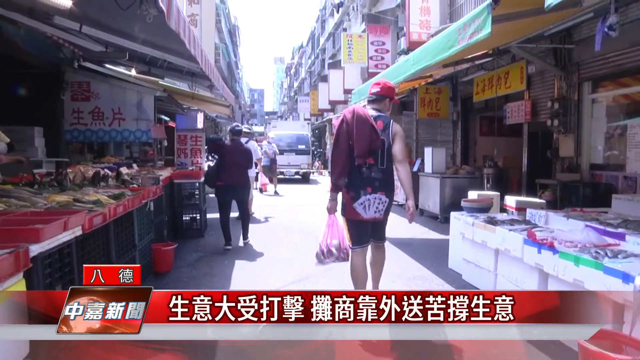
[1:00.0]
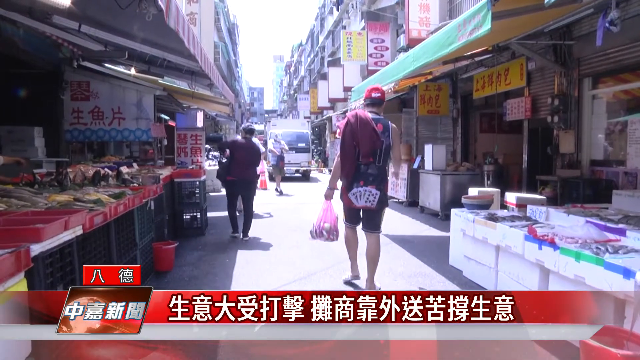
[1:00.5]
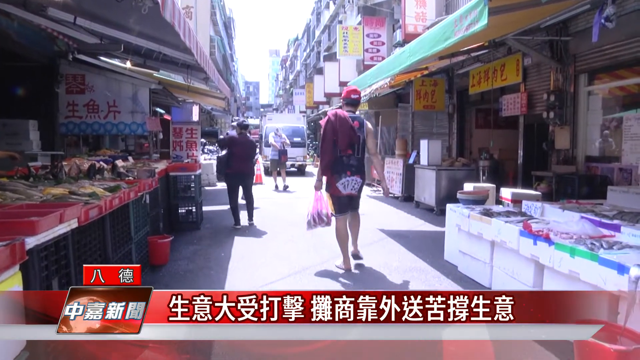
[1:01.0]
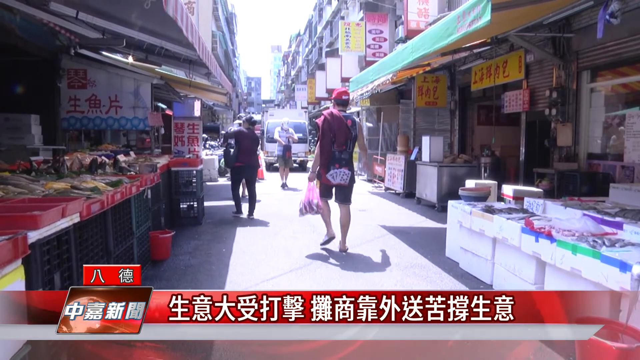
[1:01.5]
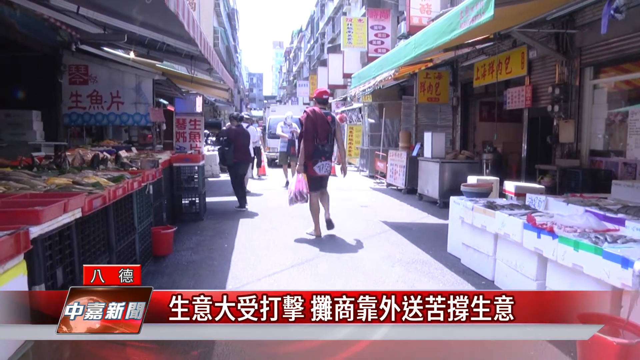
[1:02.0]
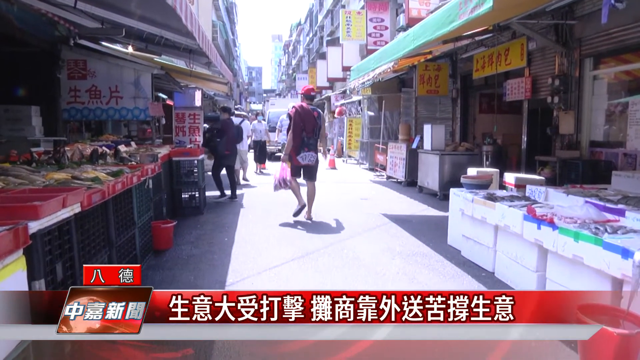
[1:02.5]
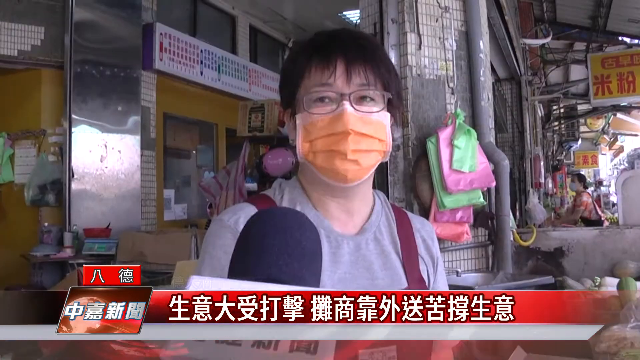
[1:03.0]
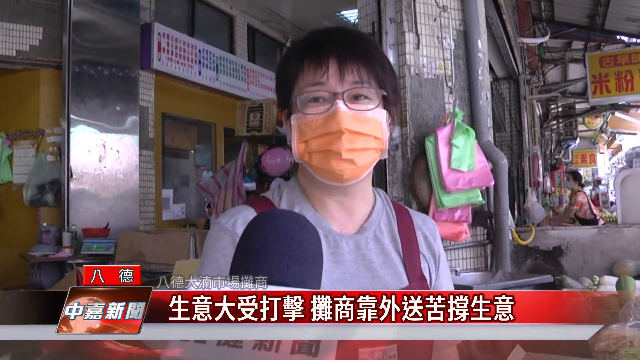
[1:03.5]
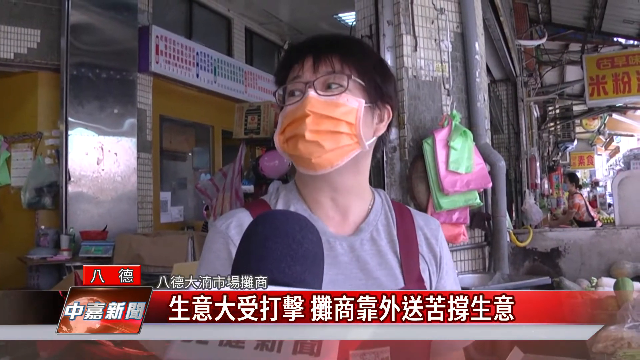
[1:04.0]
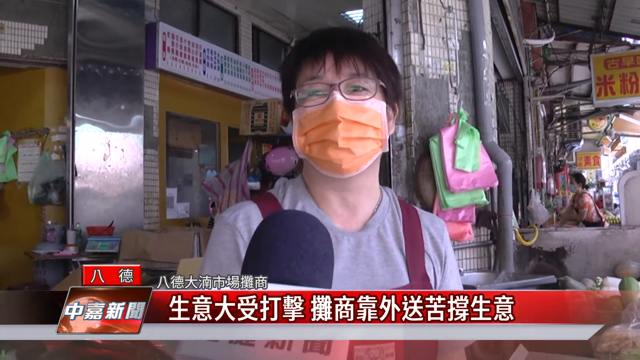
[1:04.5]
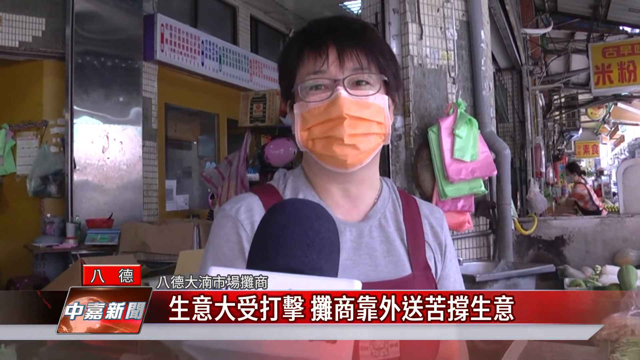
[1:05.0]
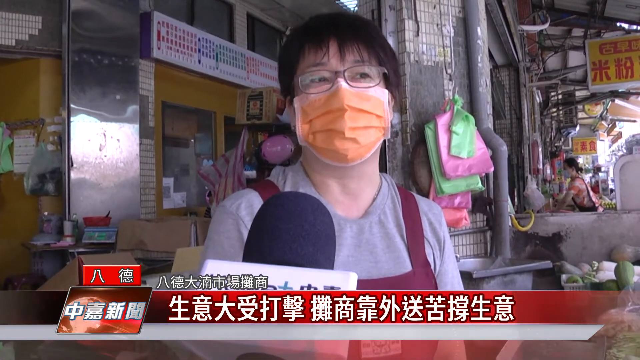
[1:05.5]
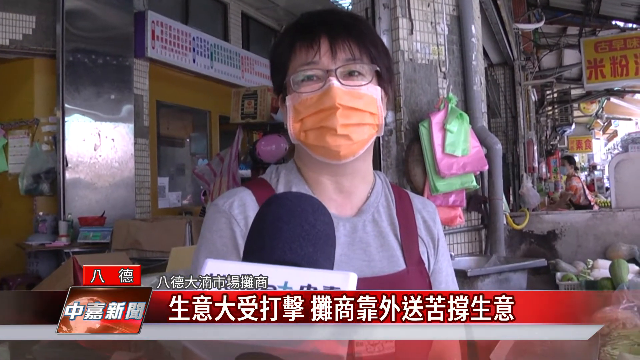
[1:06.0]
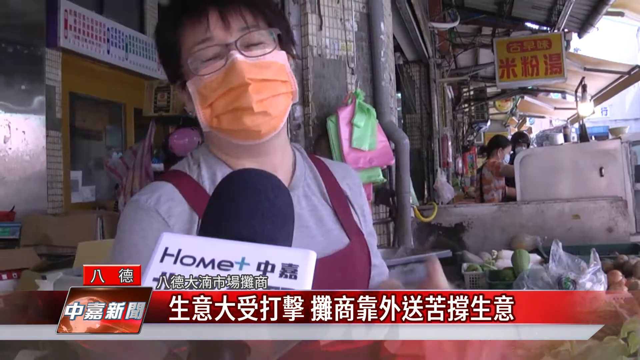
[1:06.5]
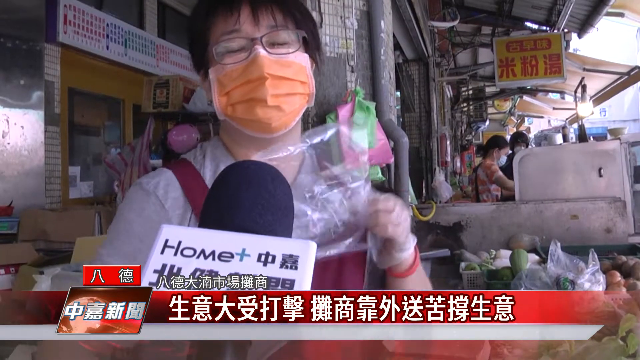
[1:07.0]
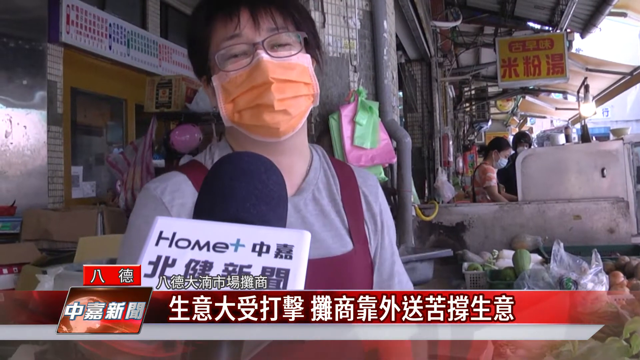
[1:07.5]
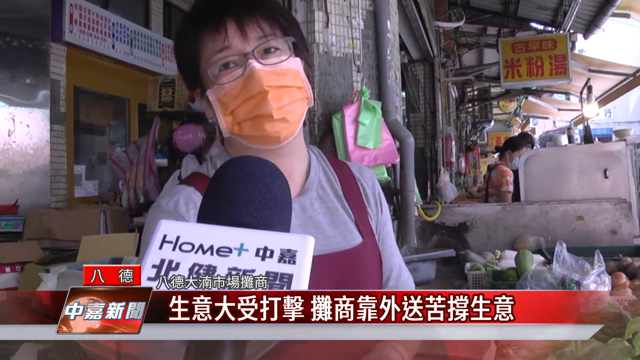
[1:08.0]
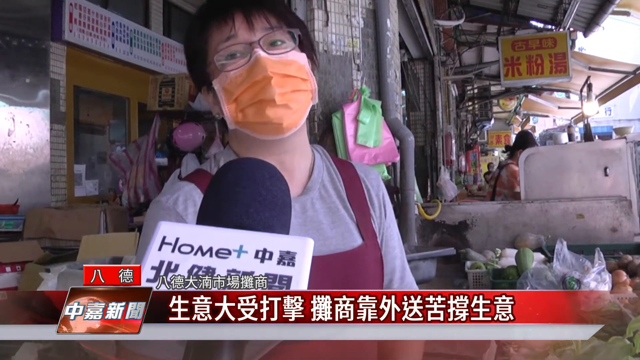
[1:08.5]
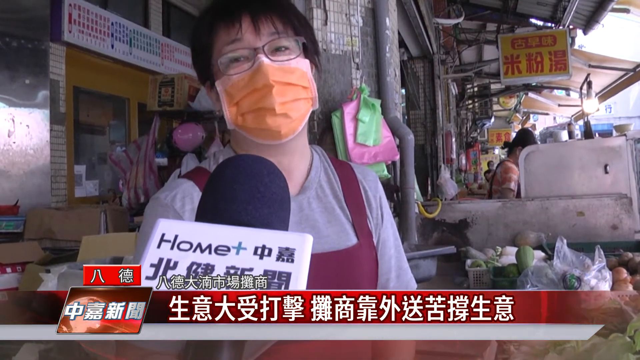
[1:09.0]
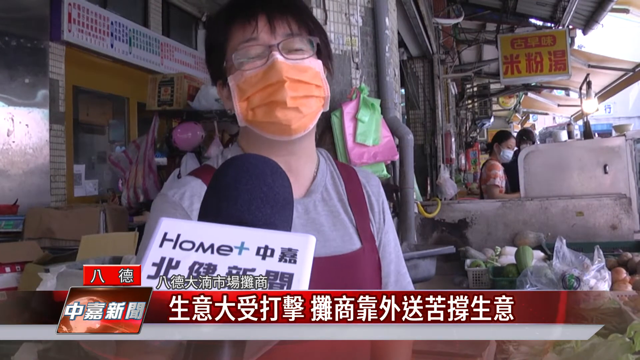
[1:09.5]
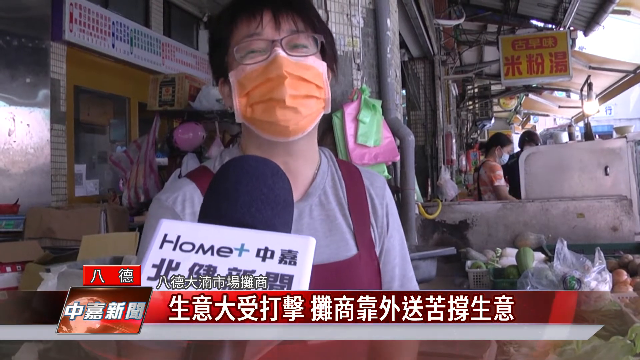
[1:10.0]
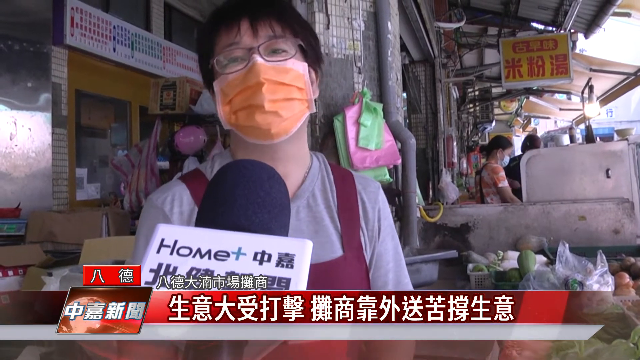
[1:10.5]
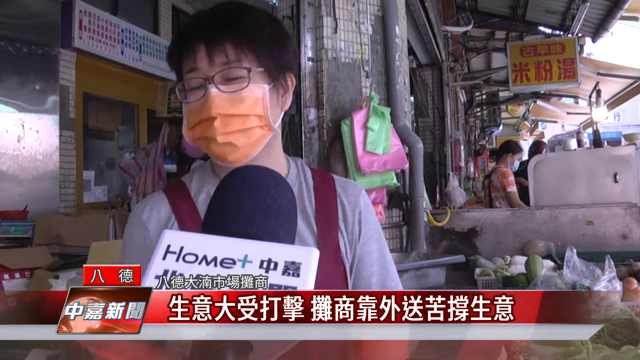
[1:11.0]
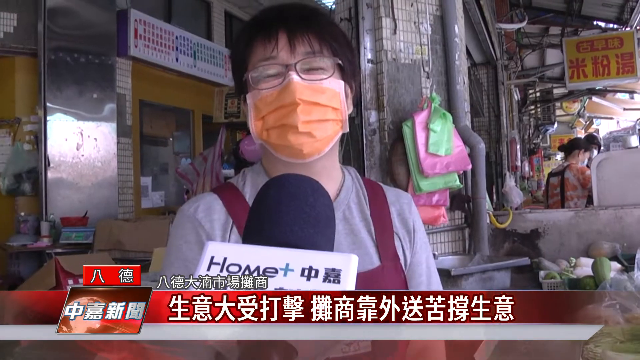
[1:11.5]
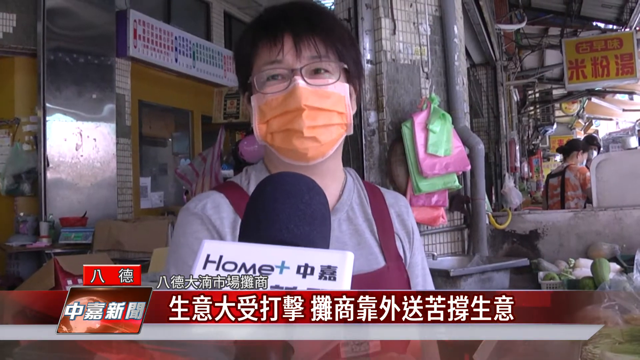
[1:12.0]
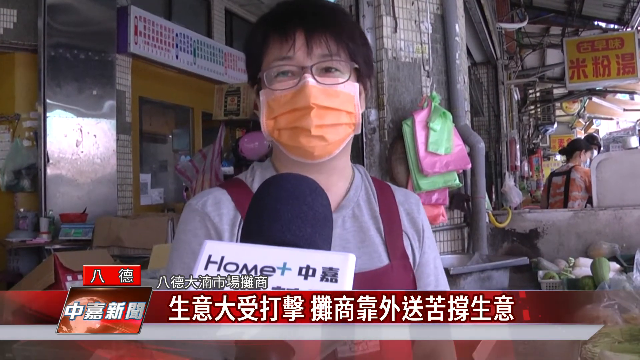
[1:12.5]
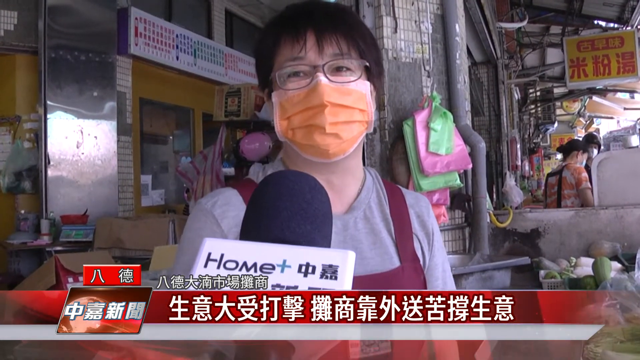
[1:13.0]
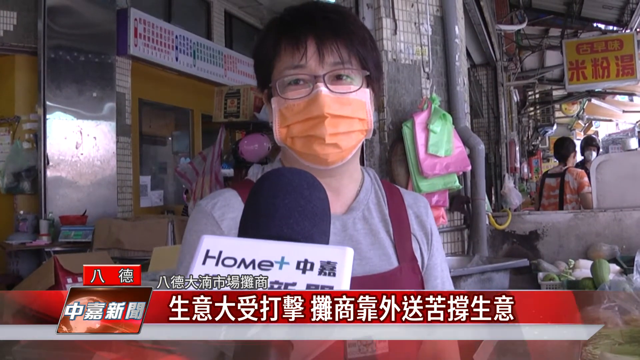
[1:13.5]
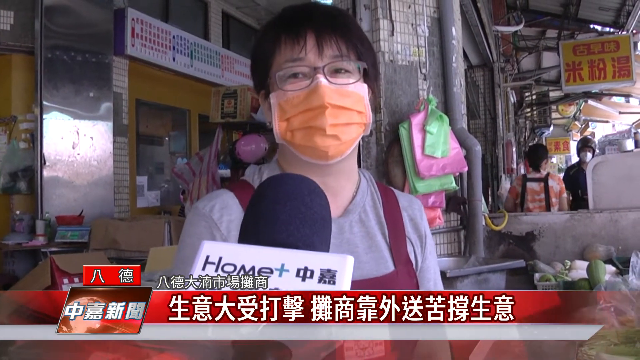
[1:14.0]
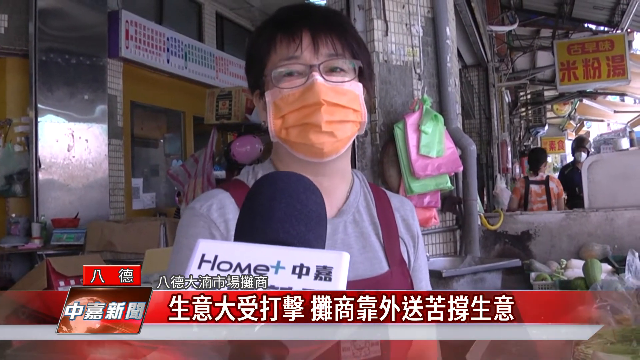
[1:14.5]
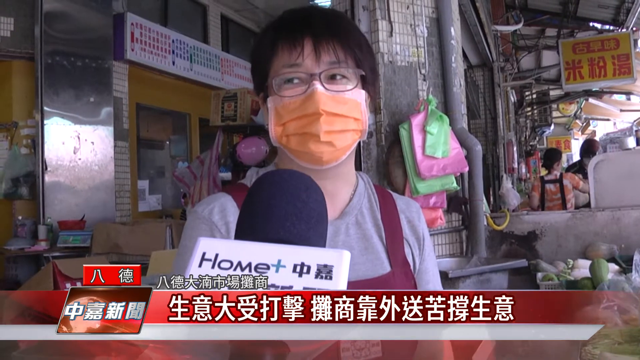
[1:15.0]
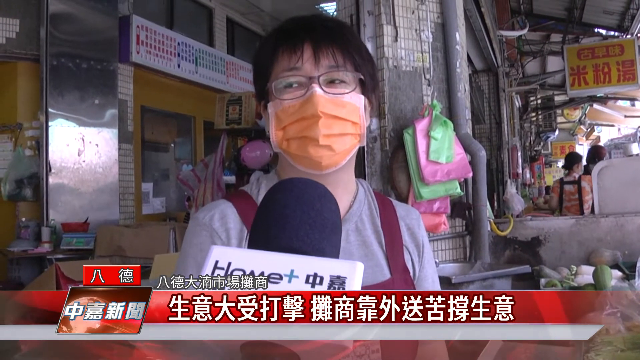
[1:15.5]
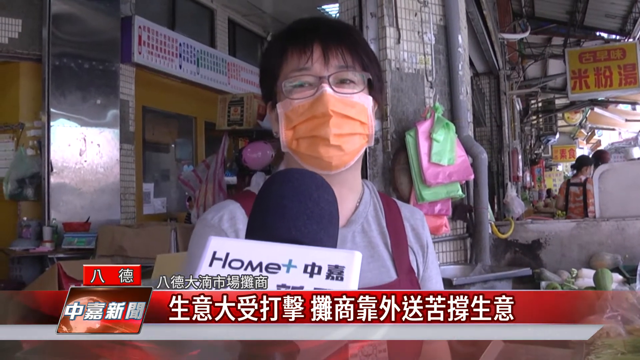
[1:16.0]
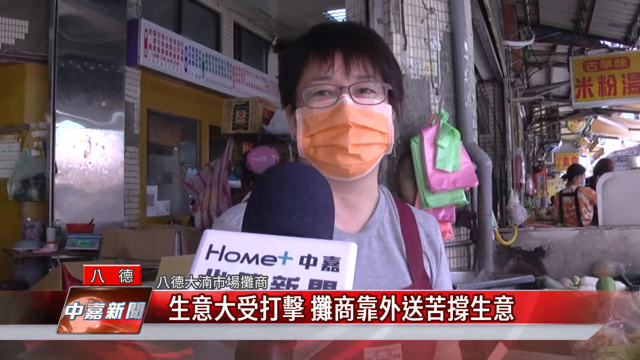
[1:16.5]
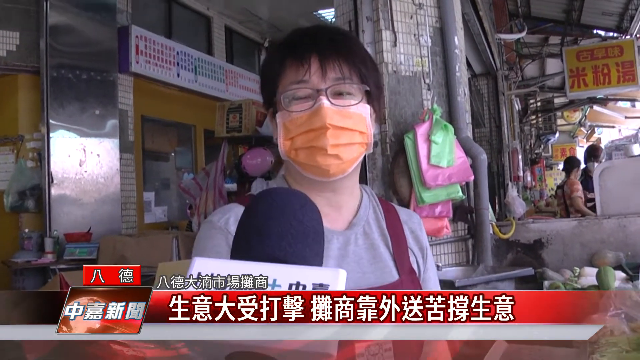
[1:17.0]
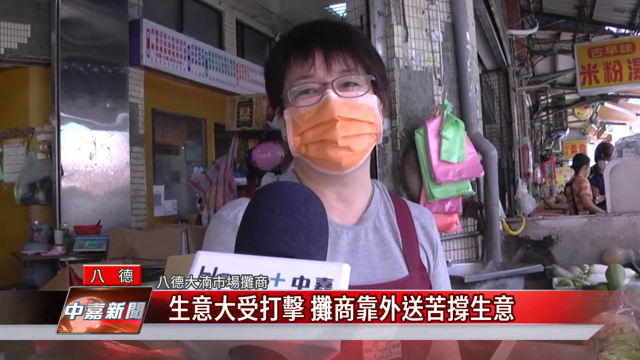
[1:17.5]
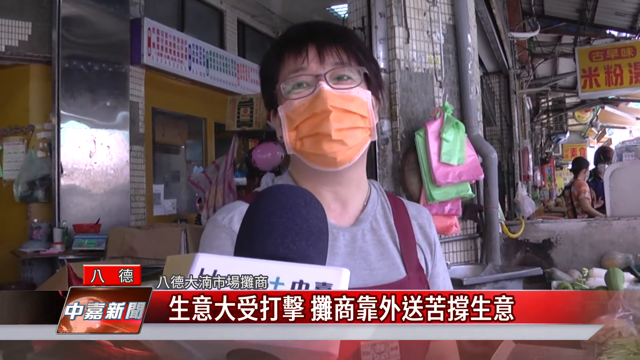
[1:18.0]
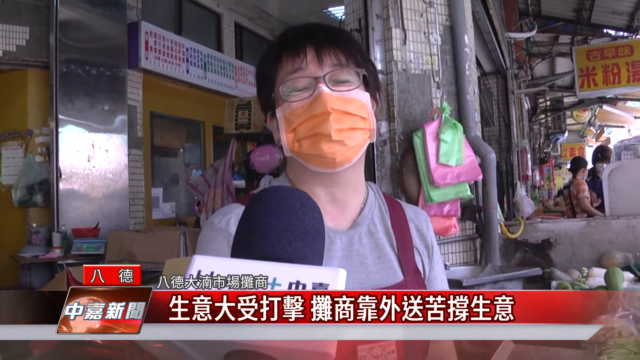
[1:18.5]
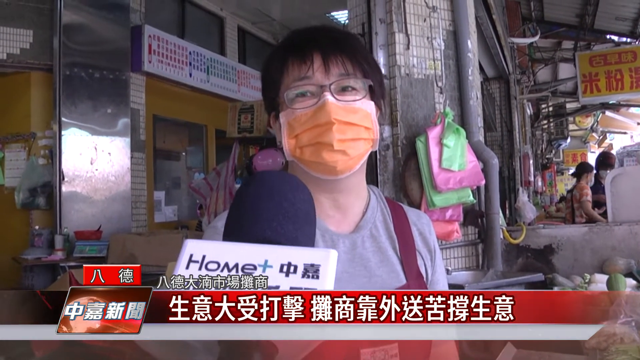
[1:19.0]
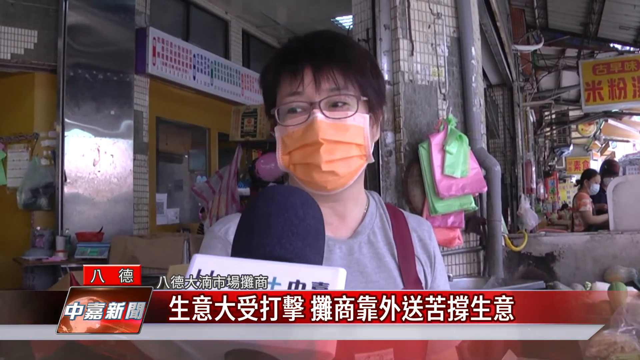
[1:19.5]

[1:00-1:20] A person in a gray shirt, an orange mask and glasses is being interviewed. A red banner with white text characters in some sort of Asian language runs along the bottom. The setting looks like an open-air market type area, with colorful items for sale, apparently including some fruits and vegetables. The person wears what looks like an apron of sorts, so they might possibly be one of the workers at one of the stalls. A silver reflective thing is on the left side, and signs are behind the person. The shot focuses on the microphone, which has a black mic cover and is white and blue. Workers are visible in the background. At one point the person holds a plastic bag; they are wearing gloves. The person appears to be very friendly and is nodding. There appear to be a bunch of quick cuts in the editing. The footage was taken during the day, and red and gold signs from the other stalls or shops are visible.